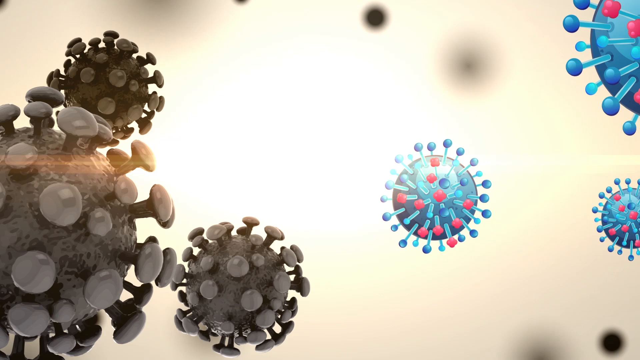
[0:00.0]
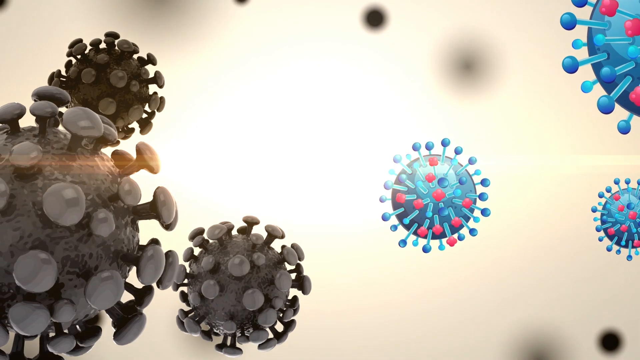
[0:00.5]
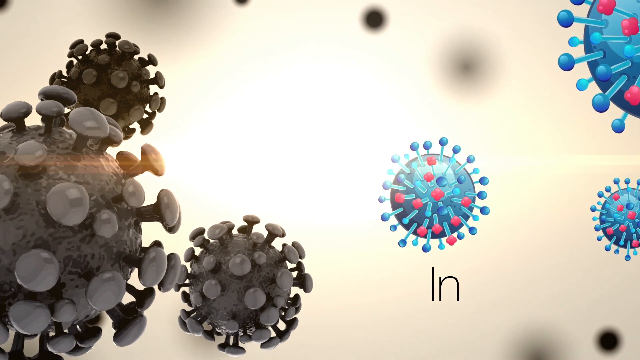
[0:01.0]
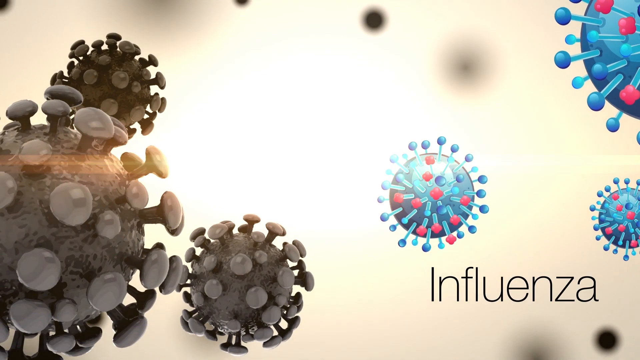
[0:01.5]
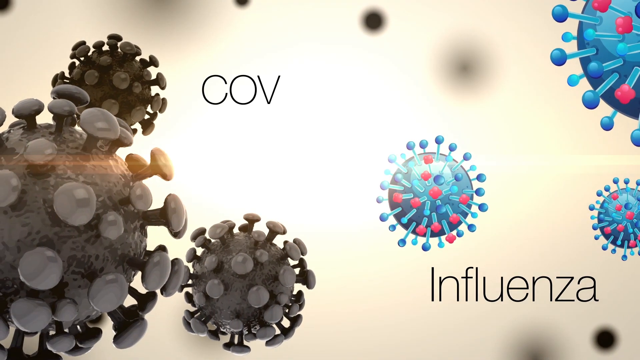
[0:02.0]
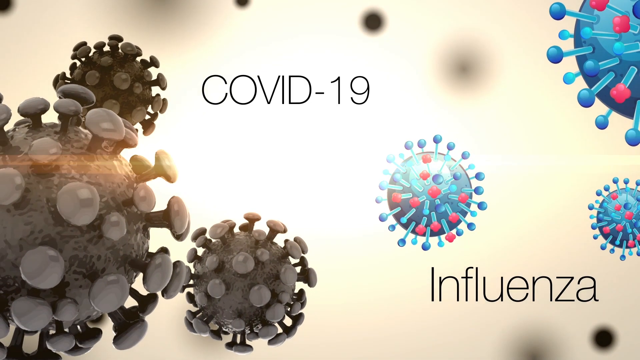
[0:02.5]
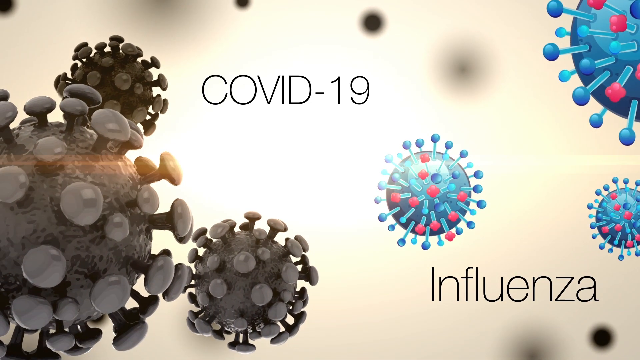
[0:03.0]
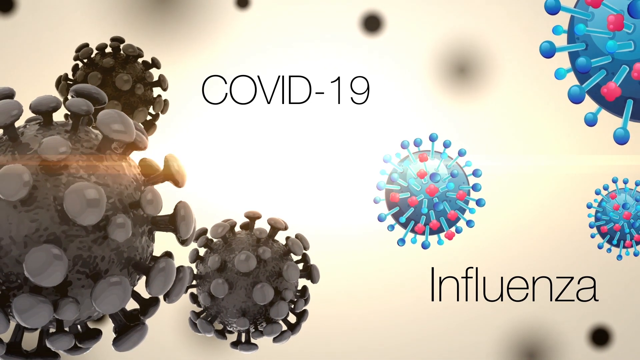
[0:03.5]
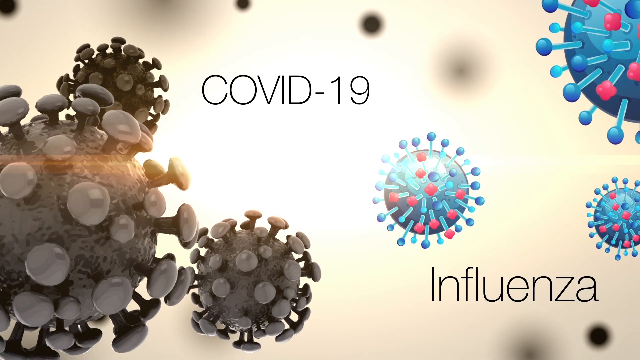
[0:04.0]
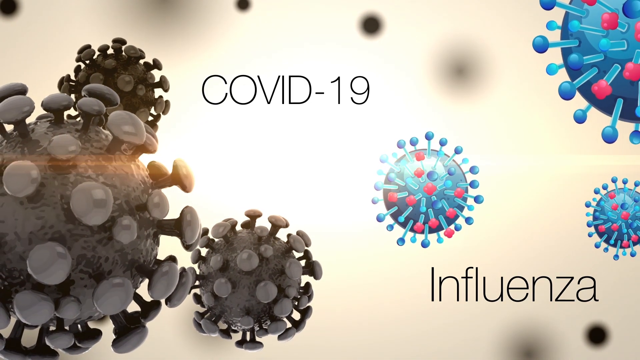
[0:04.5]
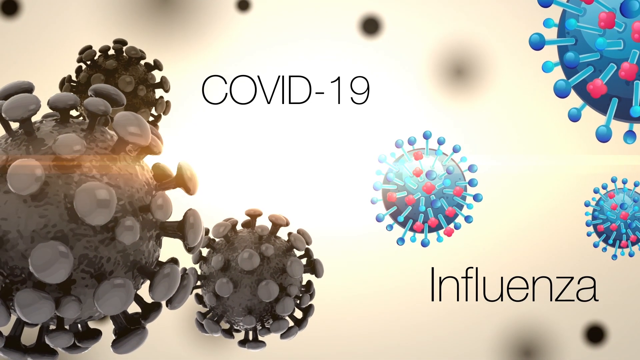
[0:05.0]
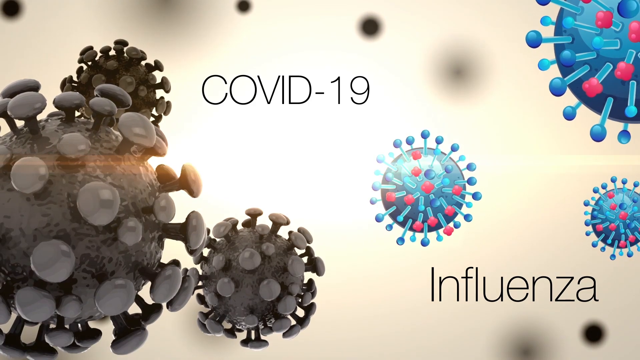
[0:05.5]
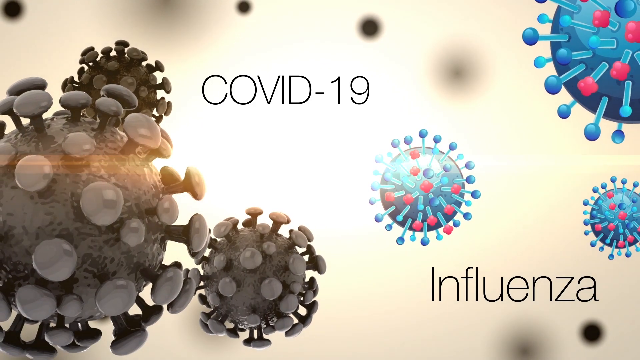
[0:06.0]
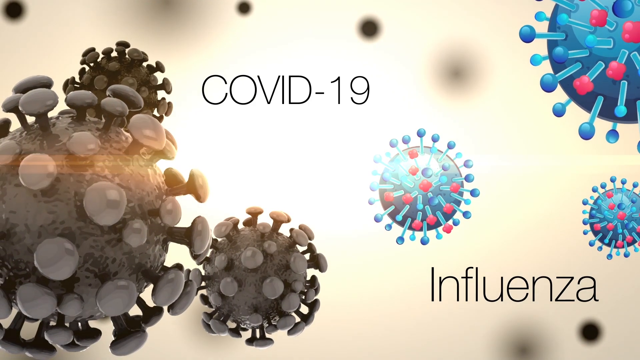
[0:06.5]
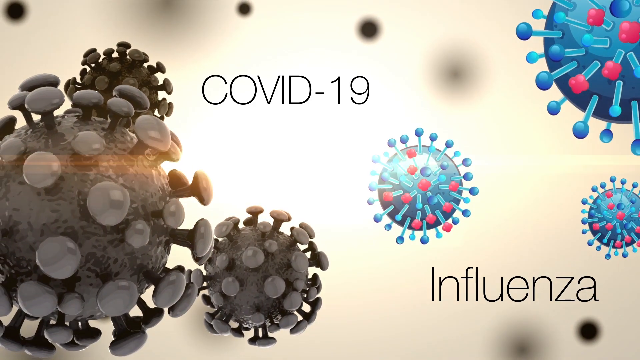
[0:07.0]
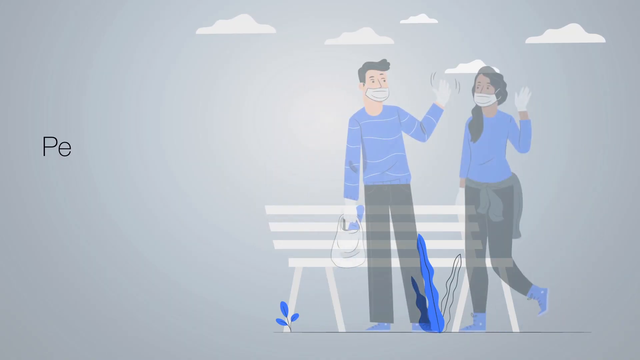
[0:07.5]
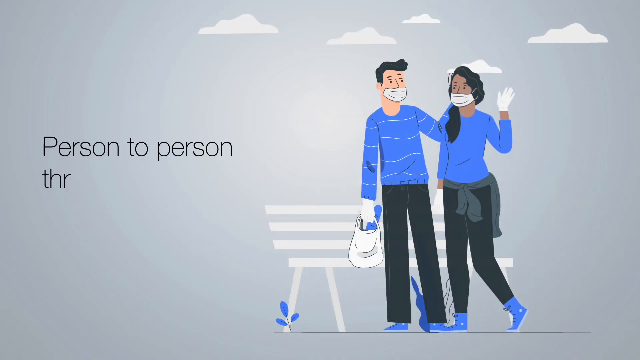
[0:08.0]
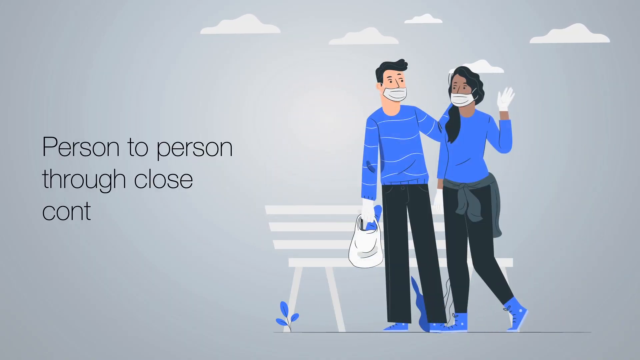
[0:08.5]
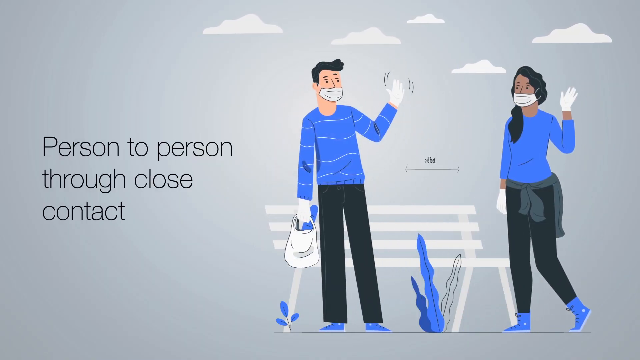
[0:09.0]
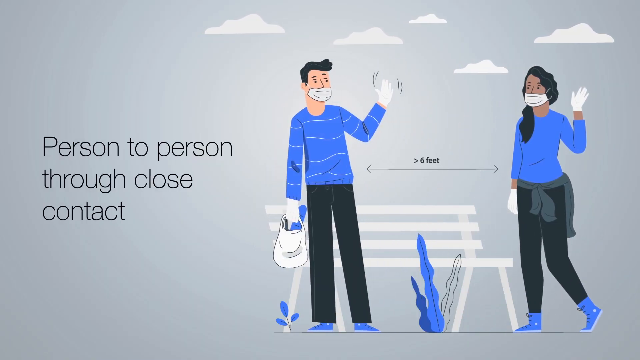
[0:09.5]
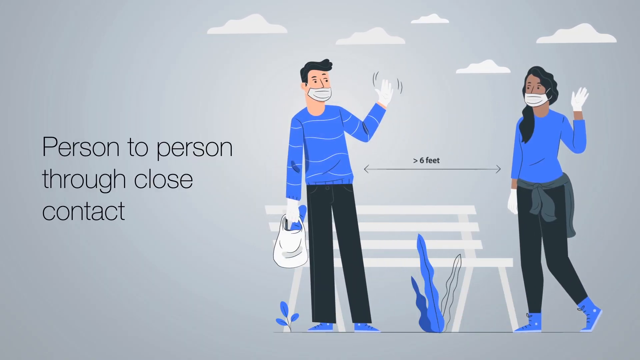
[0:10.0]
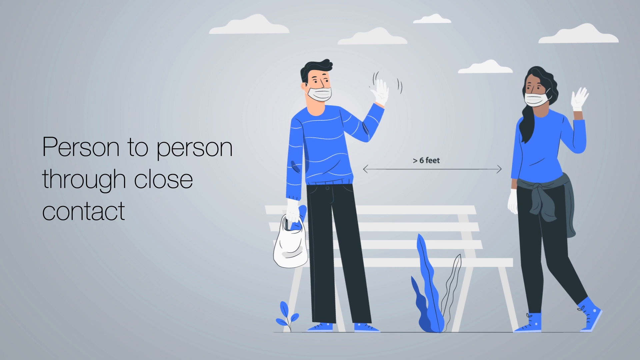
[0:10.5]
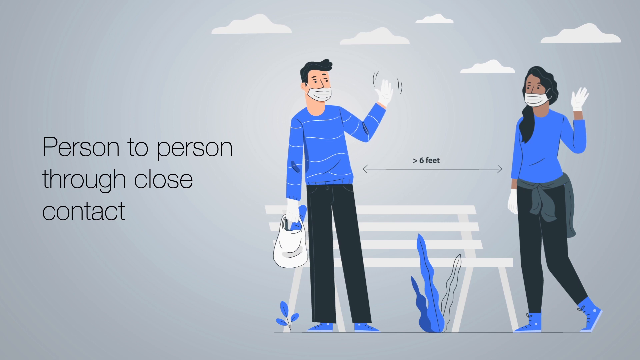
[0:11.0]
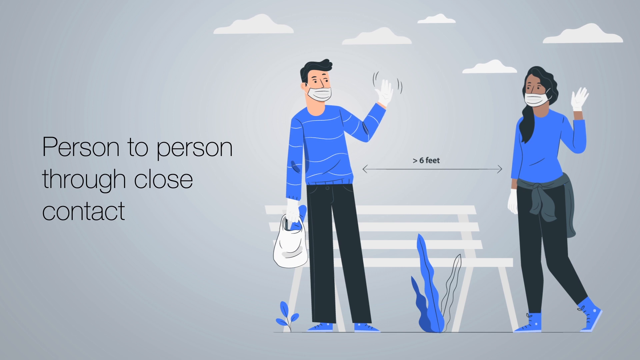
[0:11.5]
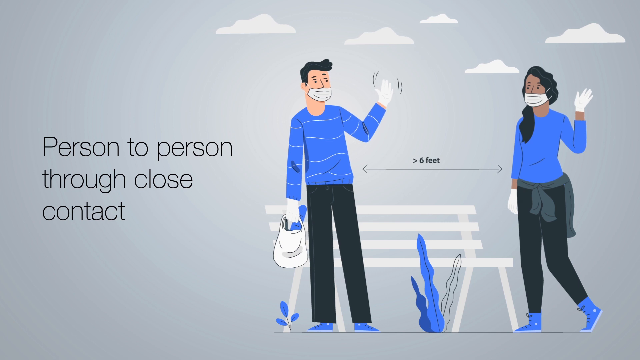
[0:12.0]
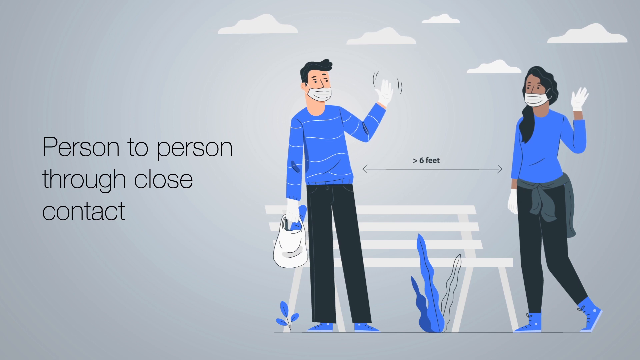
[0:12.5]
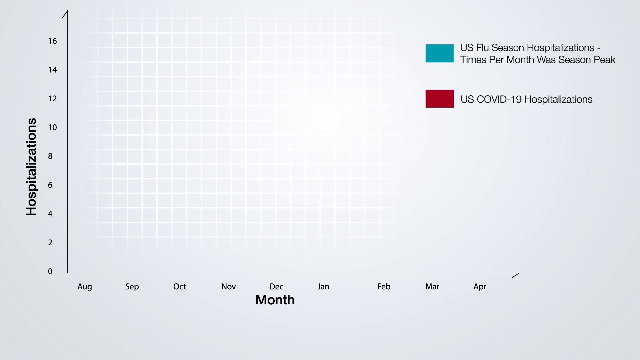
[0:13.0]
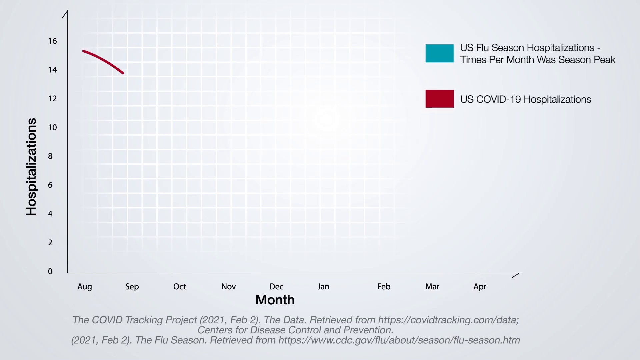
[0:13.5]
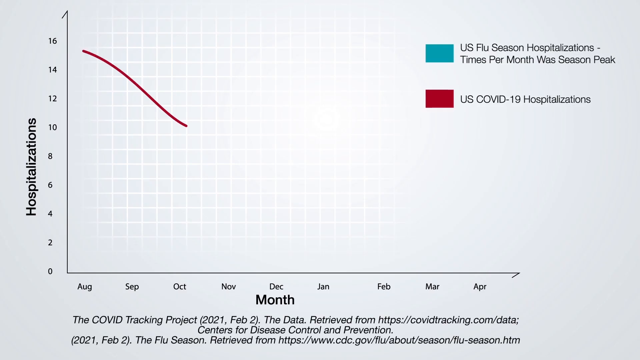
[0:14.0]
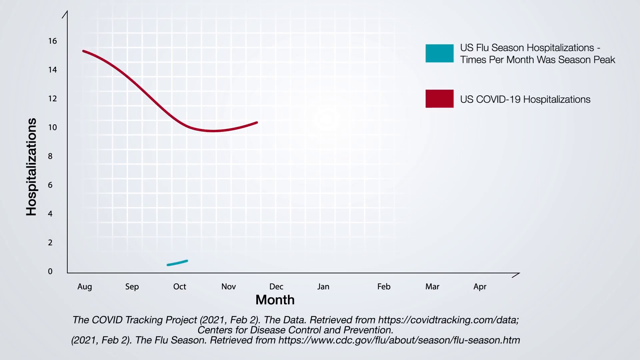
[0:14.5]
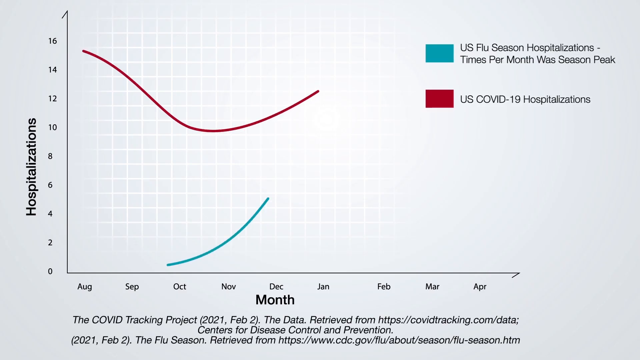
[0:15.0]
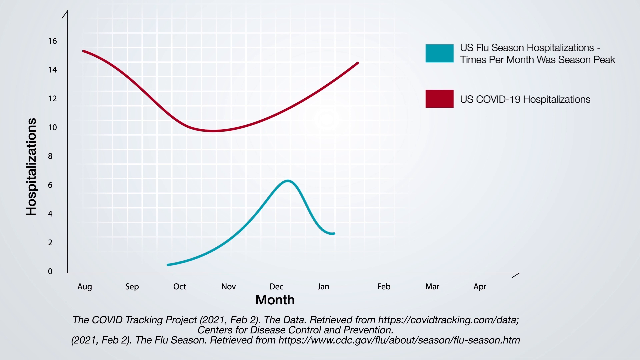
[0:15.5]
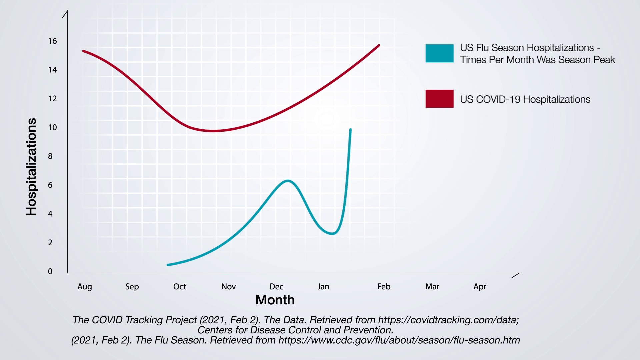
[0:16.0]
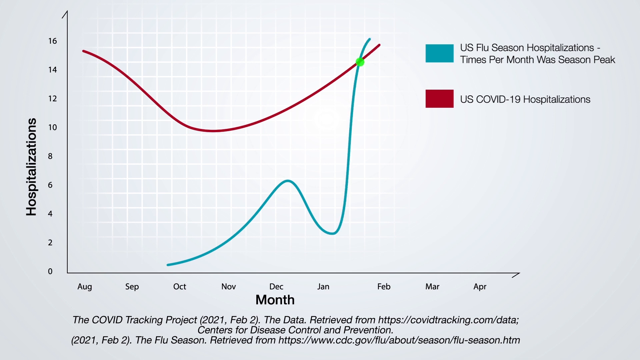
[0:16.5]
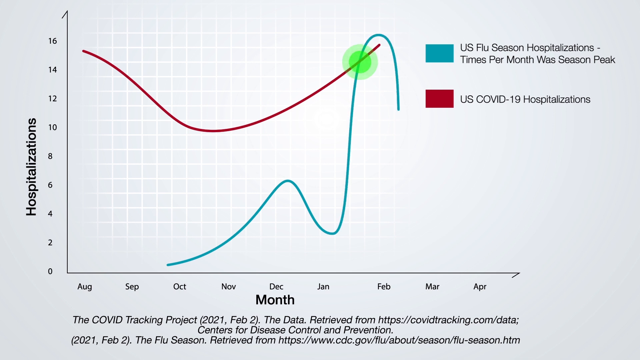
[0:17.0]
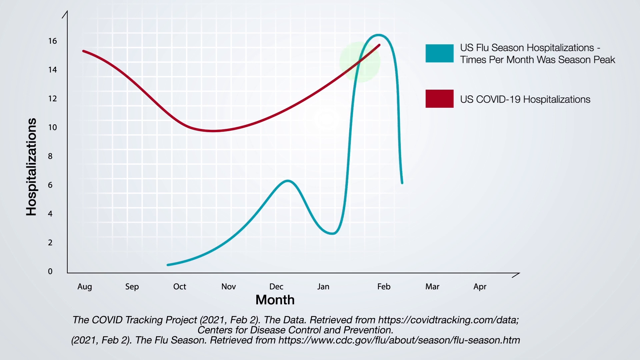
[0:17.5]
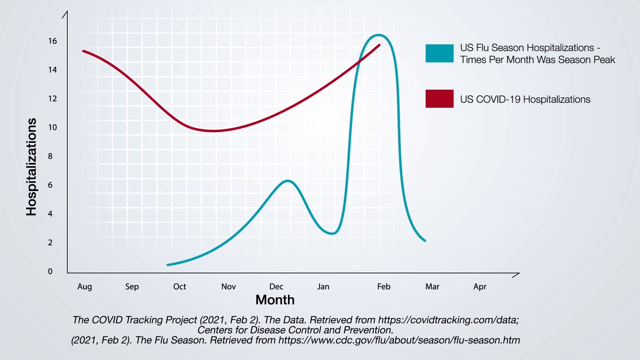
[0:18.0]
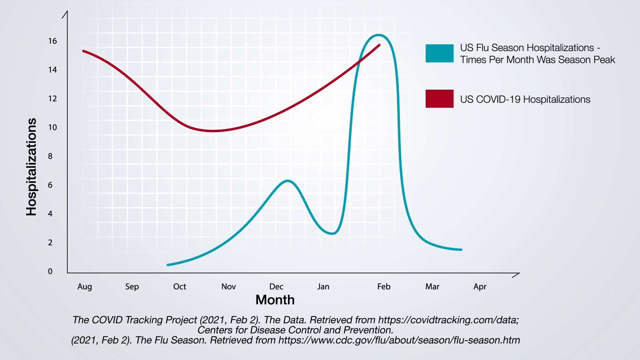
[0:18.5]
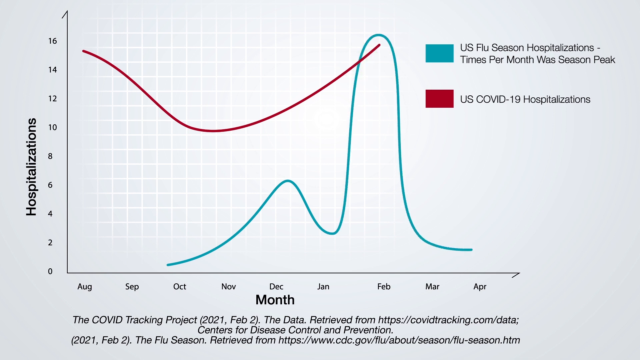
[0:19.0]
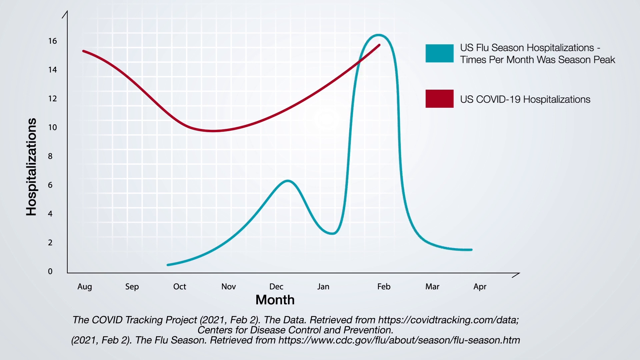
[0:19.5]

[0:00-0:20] The video is about COVID-19 and influenza. It opens with colored pictures of what look like little virus balls floating around the screen, with the text "influenza and COVID-19". It then cuts to a man in a blue shirt, mask and gloves and a woman in a blue shirt, mask and gloves; both have black pants on. A line between them says "six feet", and the text on the screen says "person to person through close contact". The two figures are animated and waving. Next comes a line graph chart of hospitalizations, showing "U.S. flu season hospitalizations", which is the blue line, and "U.S. COVID-19 hospitalizations".